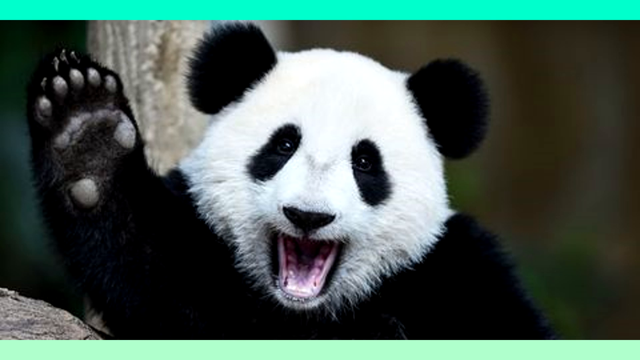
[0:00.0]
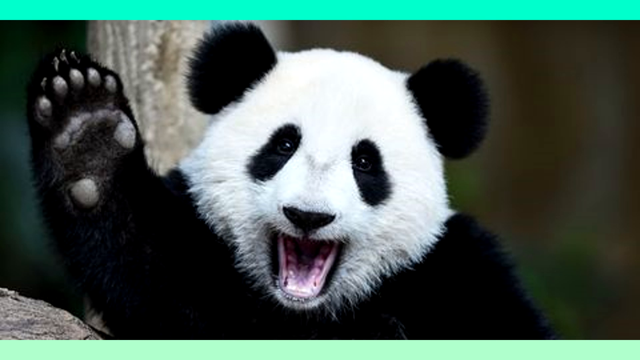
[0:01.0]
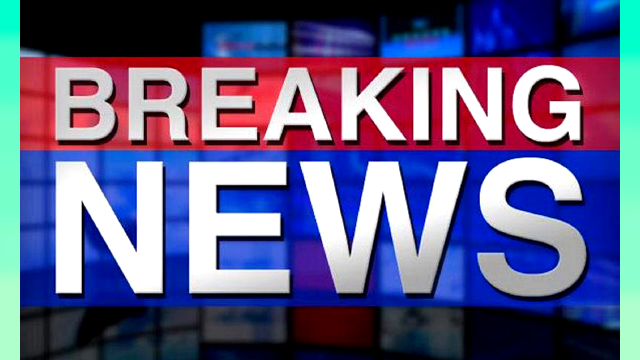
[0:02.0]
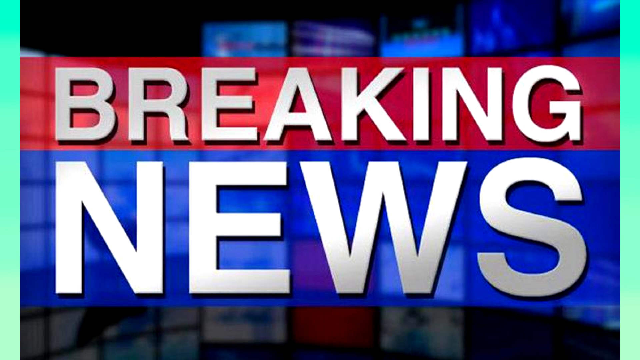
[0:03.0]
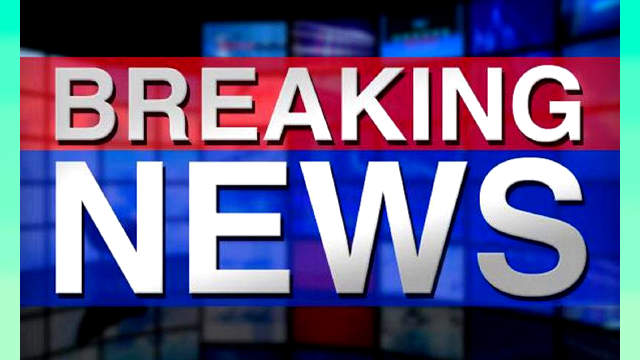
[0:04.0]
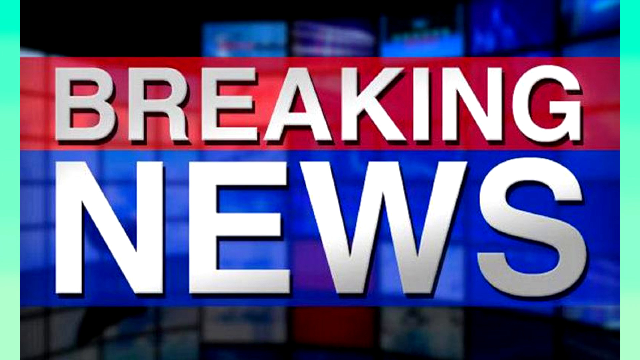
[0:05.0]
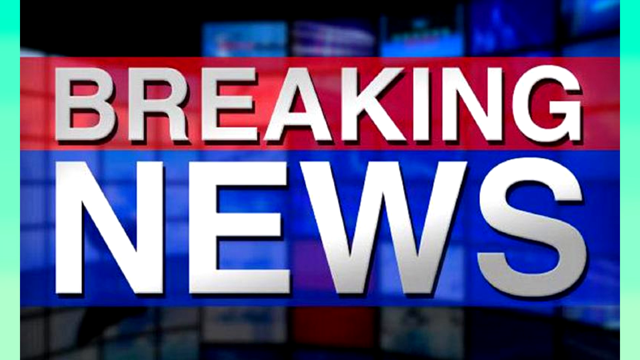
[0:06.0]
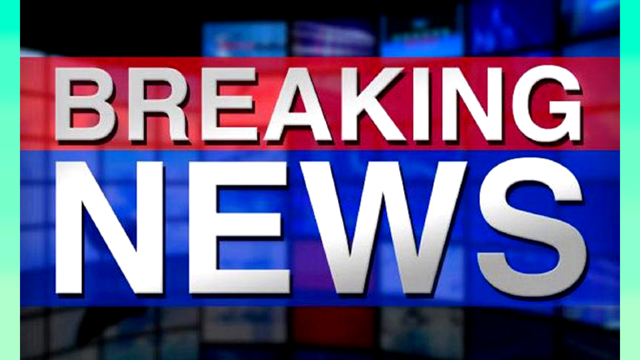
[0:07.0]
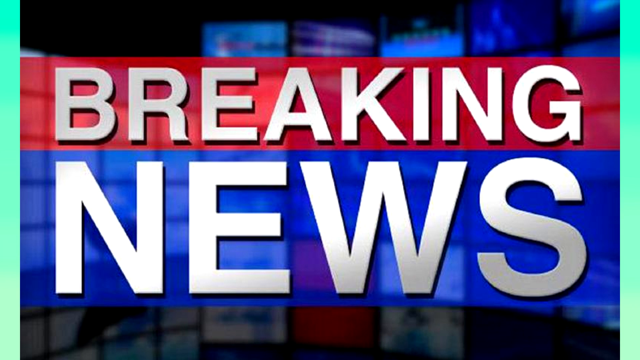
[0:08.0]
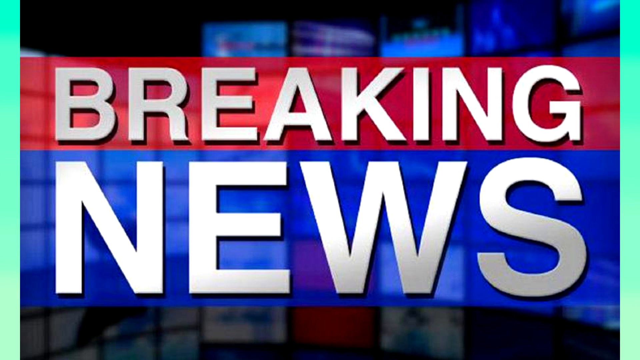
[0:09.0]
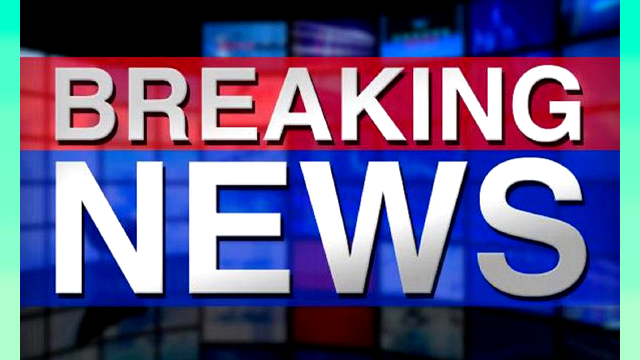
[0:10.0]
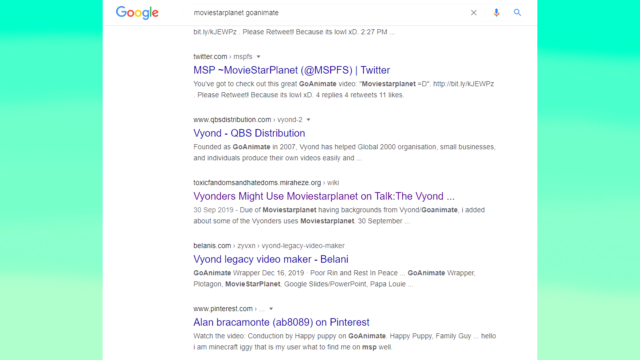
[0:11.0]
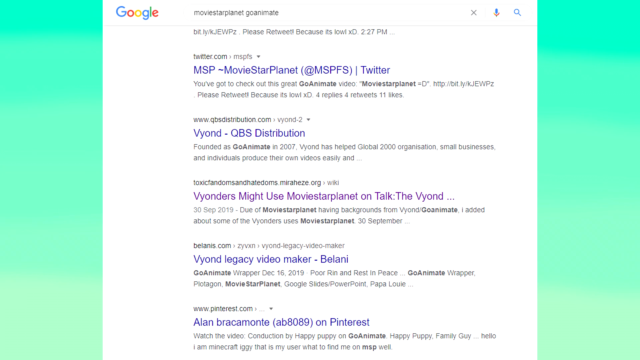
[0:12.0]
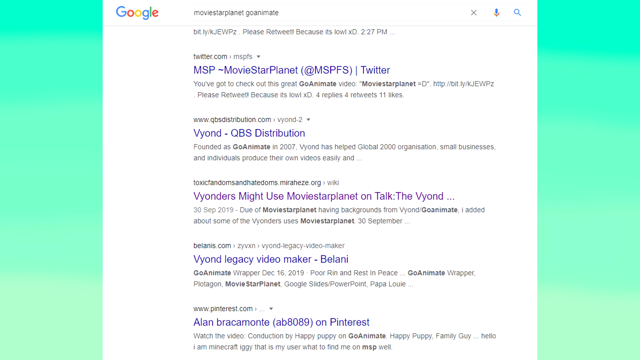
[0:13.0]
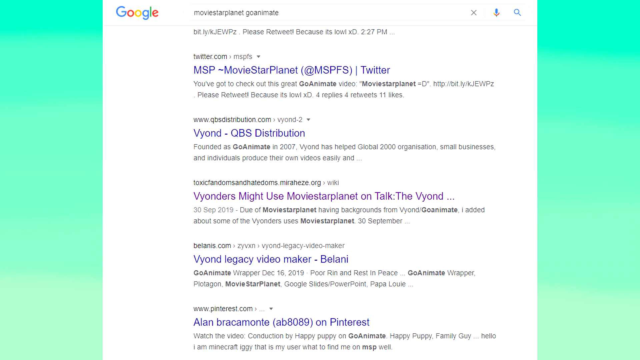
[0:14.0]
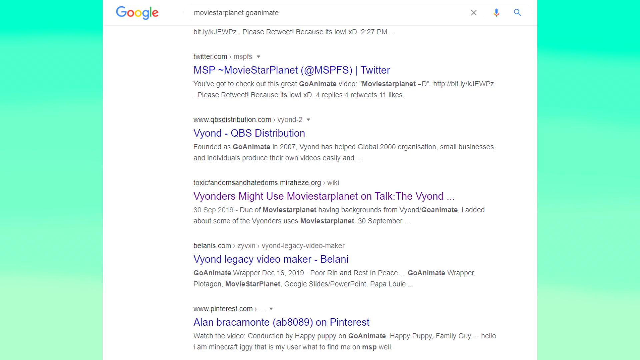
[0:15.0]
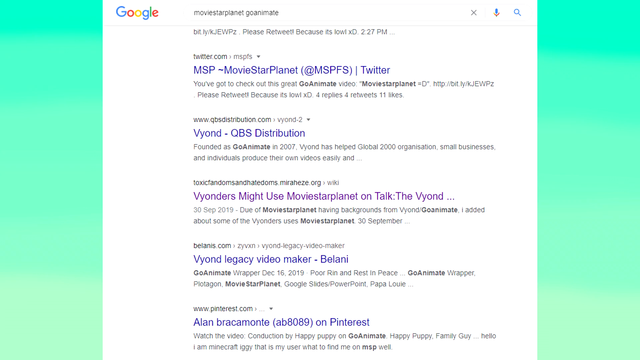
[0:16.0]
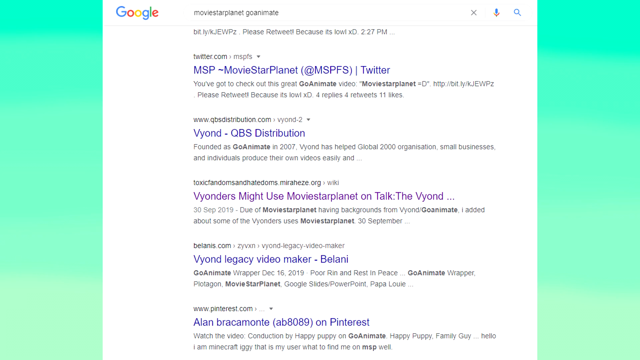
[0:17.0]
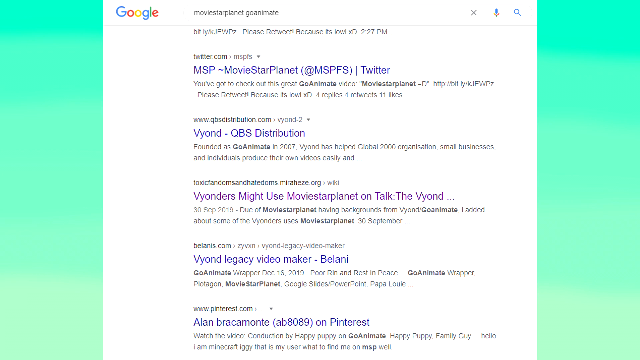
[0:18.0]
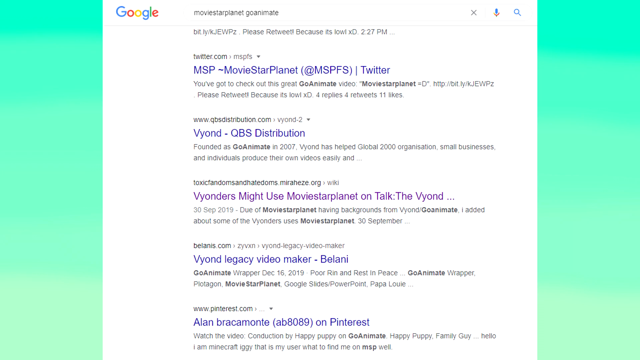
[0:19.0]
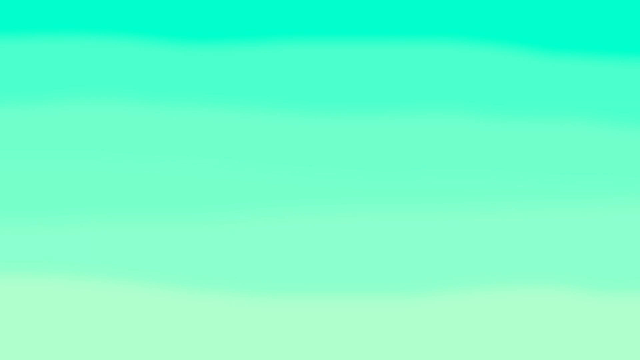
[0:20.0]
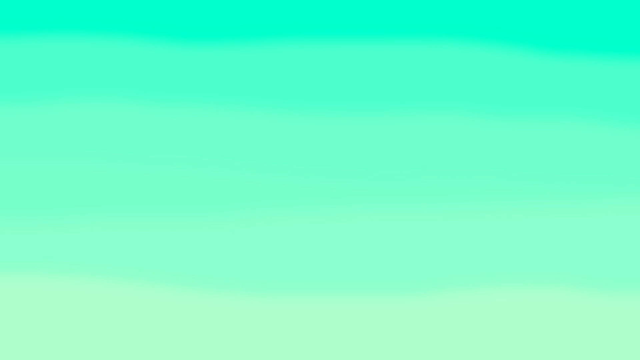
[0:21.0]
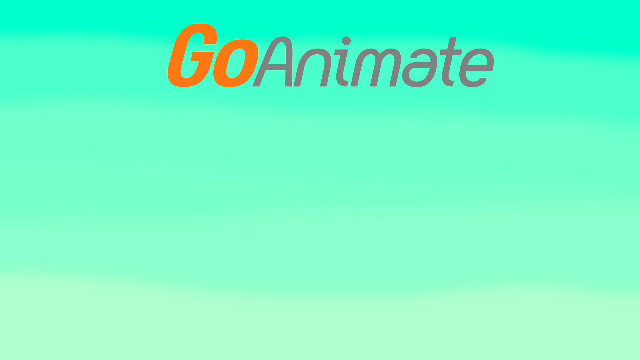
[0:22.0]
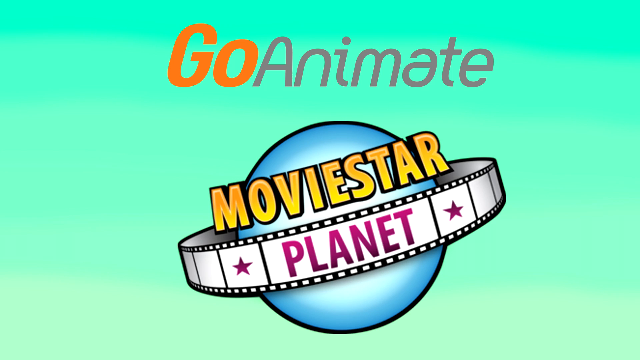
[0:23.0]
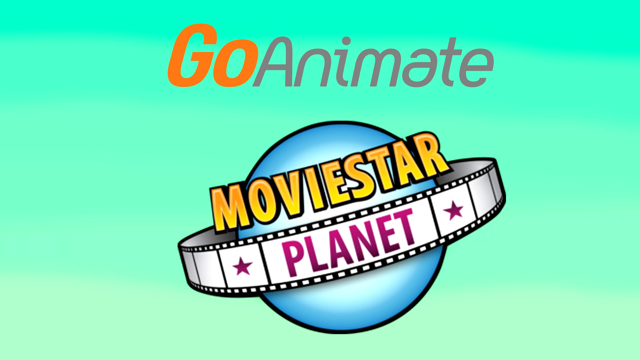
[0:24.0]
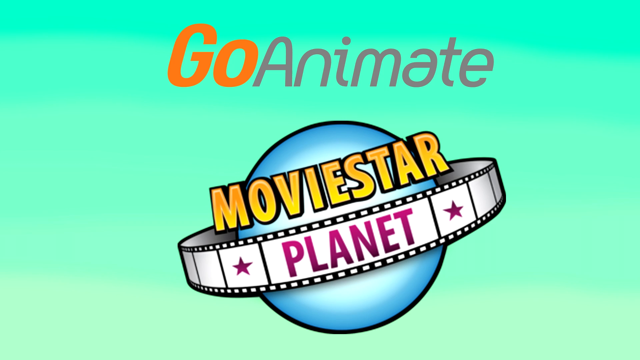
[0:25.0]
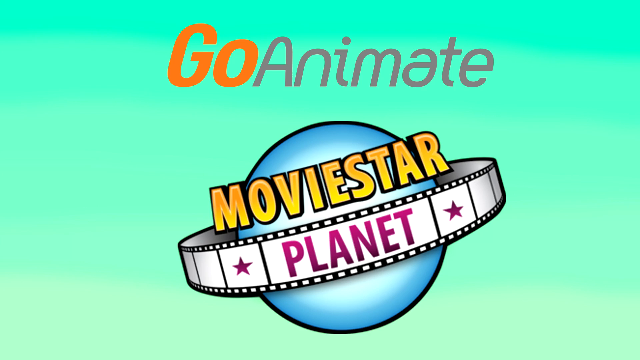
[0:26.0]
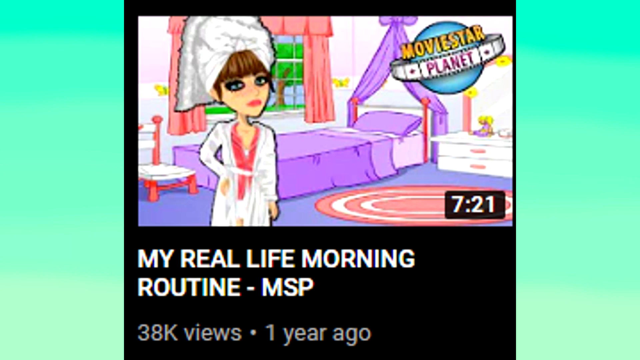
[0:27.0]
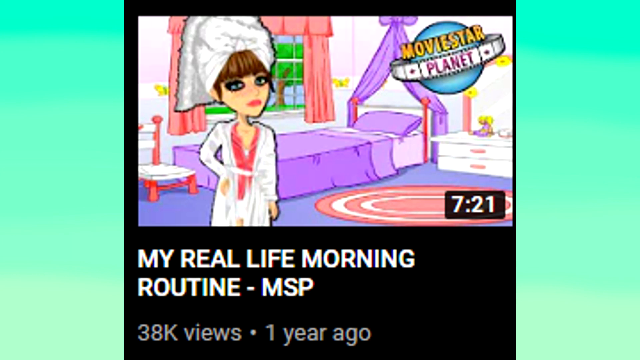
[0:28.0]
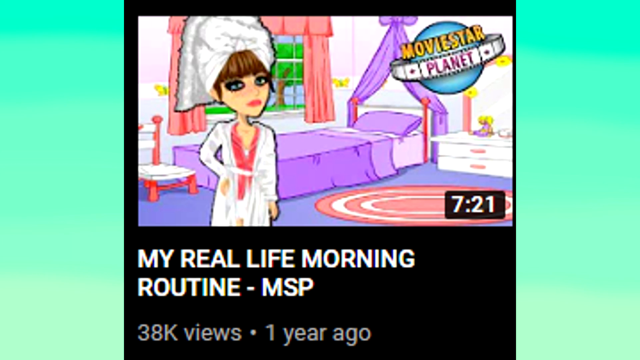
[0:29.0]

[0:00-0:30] The video opens on a picture of a panda with its mouth open, smiling directly at the camera, with one paw up in the air. Next comes an image reading "breaking news" right across the screen, with what looks like a newsroom behind it; "breaking" is in red and "news" is in blue, each with white writing on top. The video cuts to a Google search for "movie star planet go animate" and shows an ordinary search results page, where the top result seems to be a Twitter handle for movie star planet. It then cuts to a bright green screen with "go animate" coming across the top, followed by the movie star planet logo: a moon with film ticker tape going around it like the ring of Saturn, "movie star" in yellow around the top, "planet" across the ticker tape in a kind of claret colour, and a star on either side. Next is a game screen with the movie star planet logo at the top and the title "my real life morning routine - msp"; the video appears to be 7 minutes 21 long. It is animated and shows a girl in a sort of dressing robe, with brown hair, bangs and a towel around her head. Behind her is her bedroom: a bed with a purple sort of duvet cover or blanket and a pillow, a princess net over the top that is pulled back, a chair, a dressing table, and a pink rug in the middle of the room with two white circles.